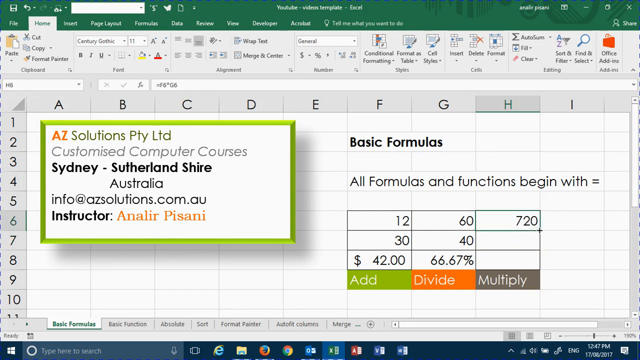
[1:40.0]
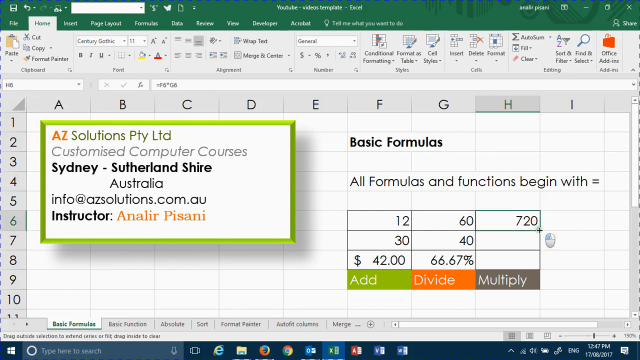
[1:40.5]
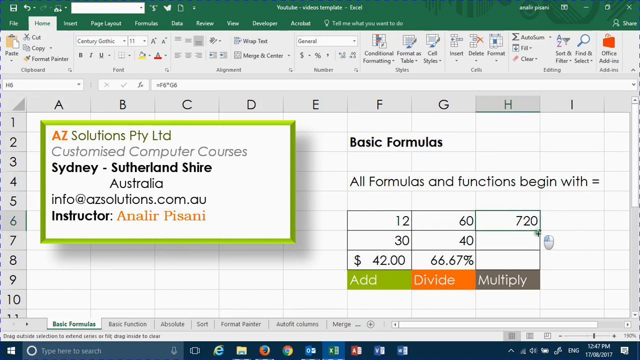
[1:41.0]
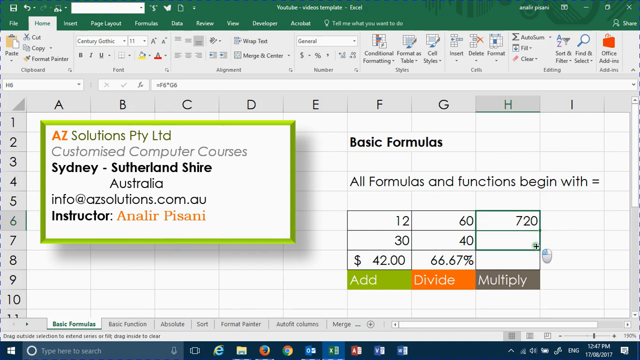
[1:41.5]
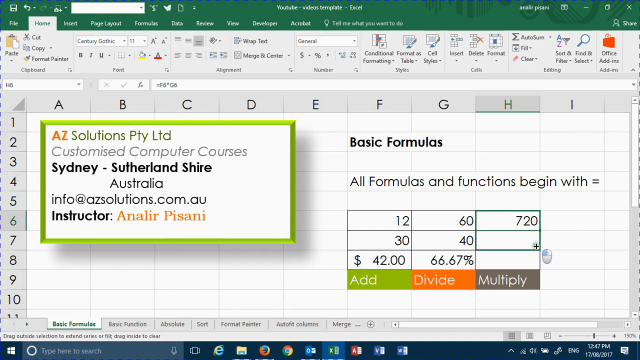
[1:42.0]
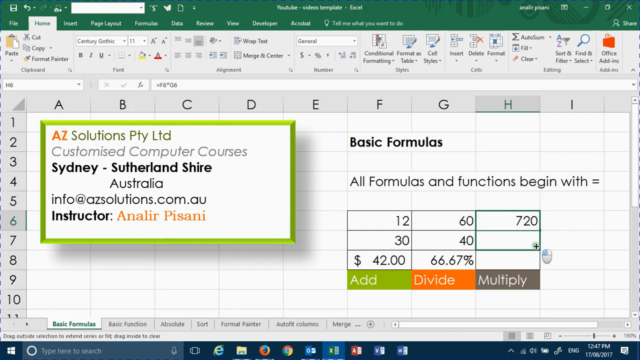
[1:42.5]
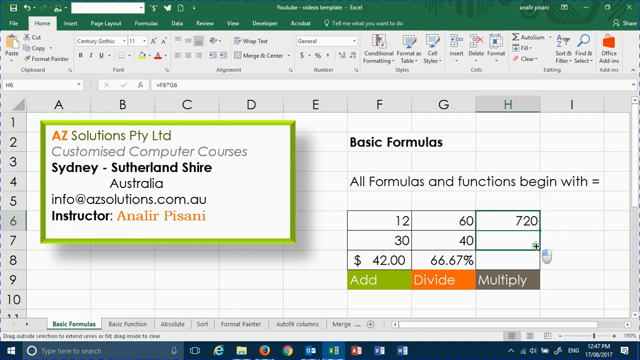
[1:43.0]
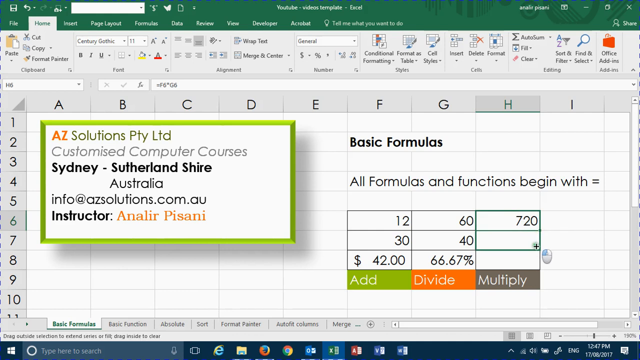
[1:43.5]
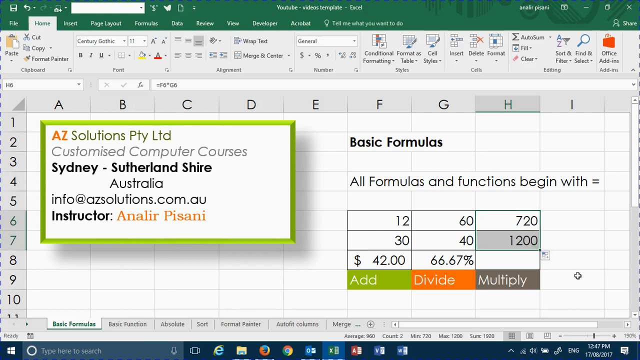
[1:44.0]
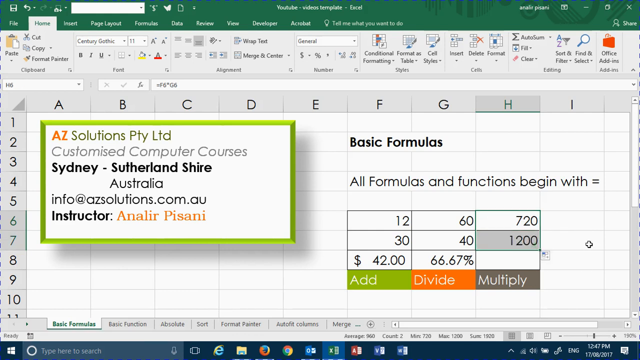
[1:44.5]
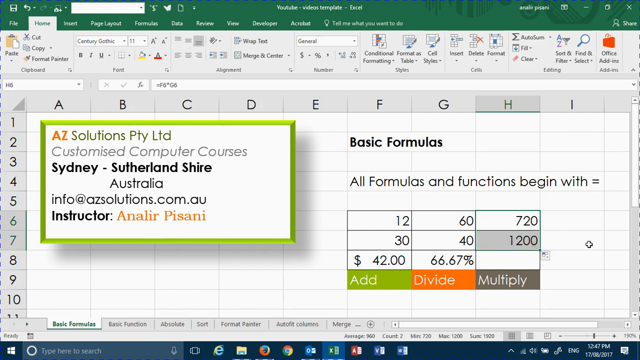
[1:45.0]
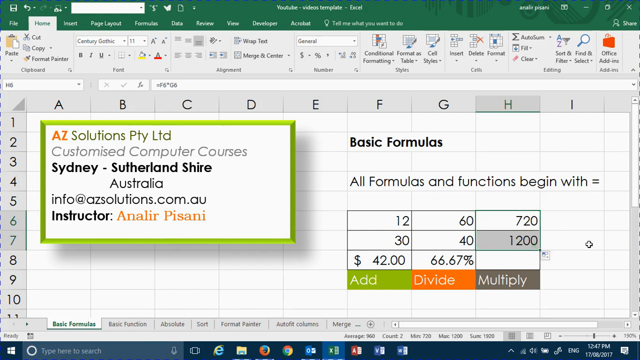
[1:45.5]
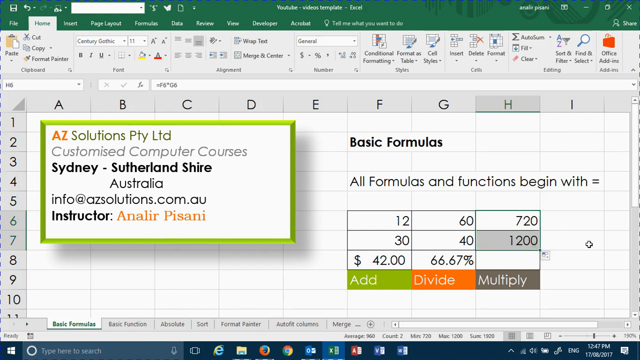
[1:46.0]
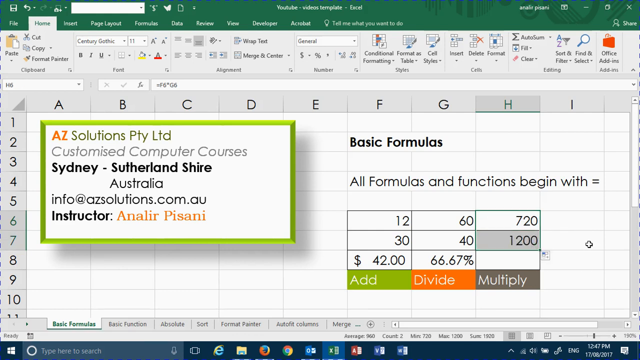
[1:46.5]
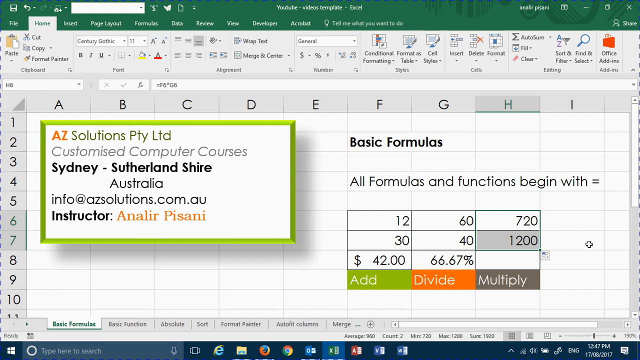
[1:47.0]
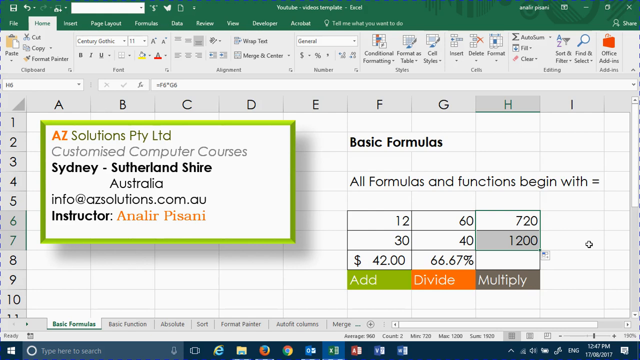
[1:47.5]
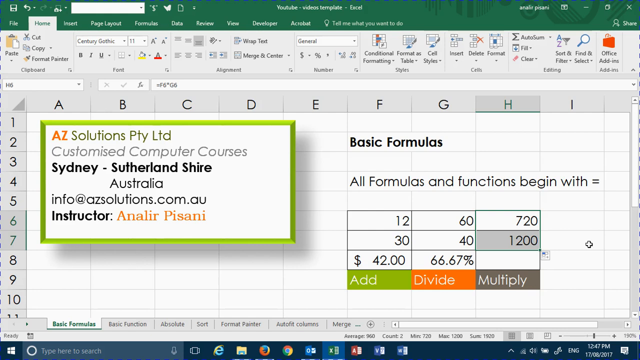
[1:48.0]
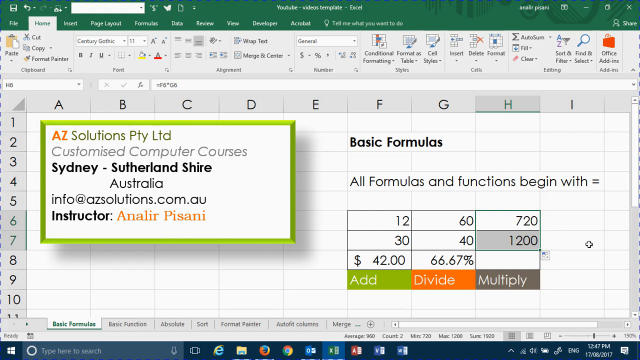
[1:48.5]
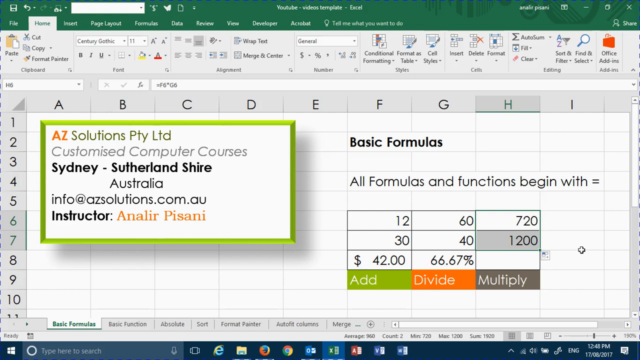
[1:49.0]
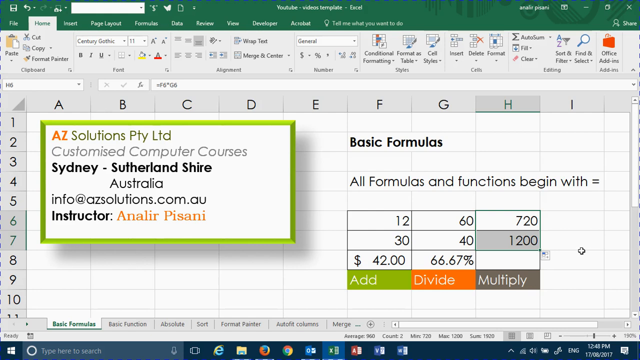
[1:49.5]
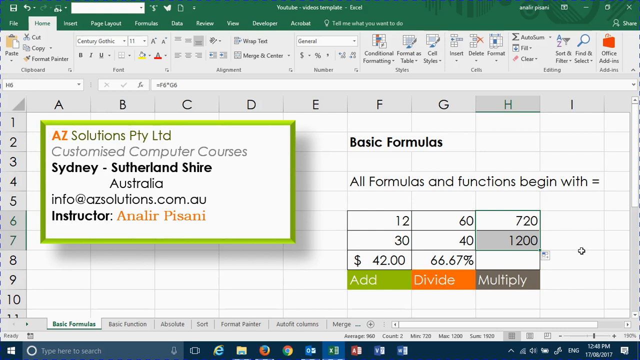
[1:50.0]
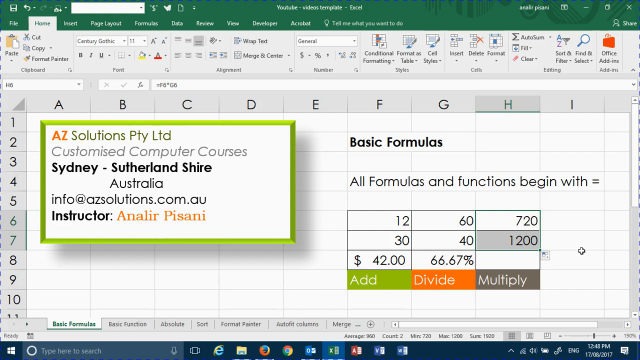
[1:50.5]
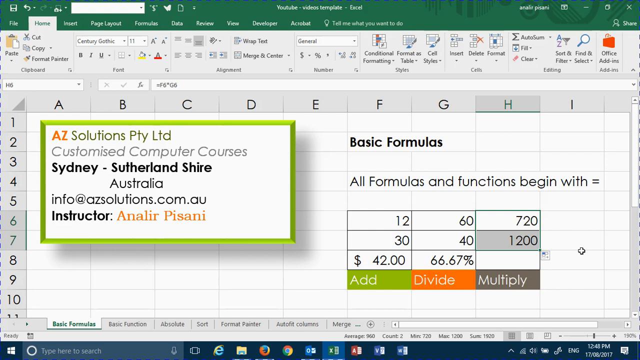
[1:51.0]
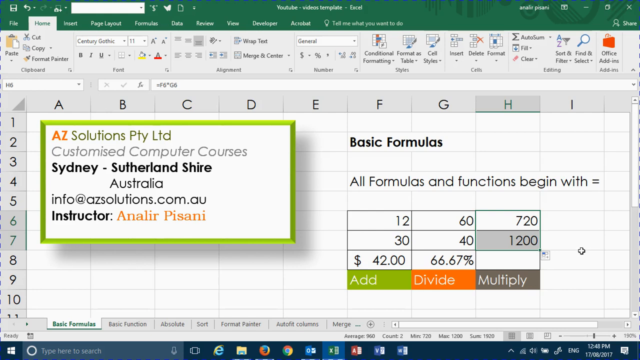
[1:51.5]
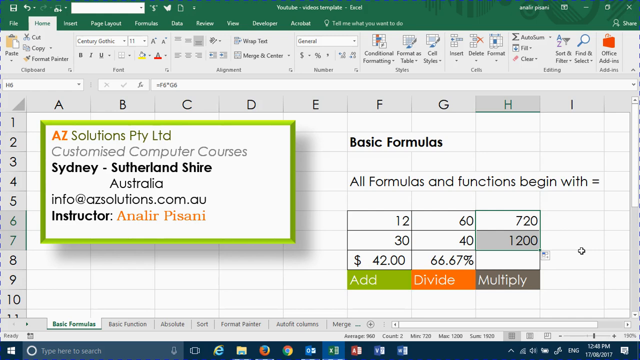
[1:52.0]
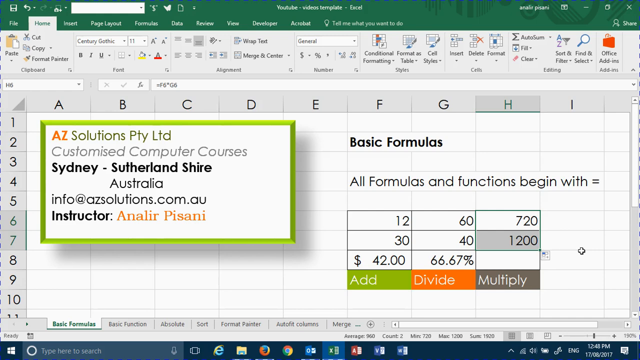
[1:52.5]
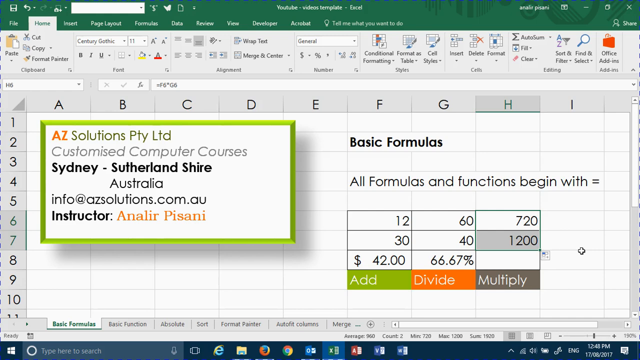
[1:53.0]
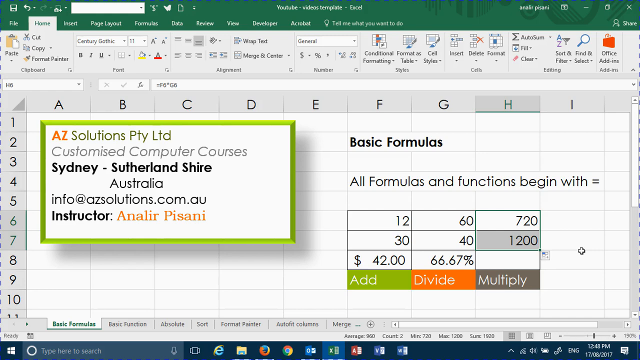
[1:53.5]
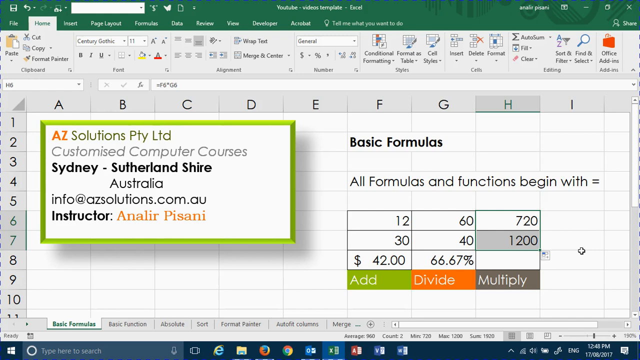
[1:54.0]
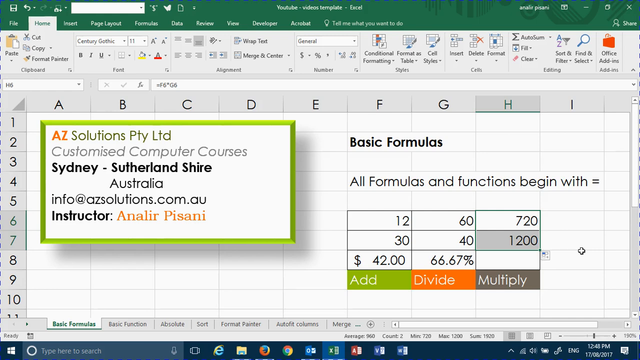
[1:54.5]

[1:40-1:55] Column H, row 6 displays the number 720. Column H, row 7 is then clicked, apparently copying the formula adjusted to that row, so it multiplies the two numbers in that row. The video then seems to linger on the second multiplication.